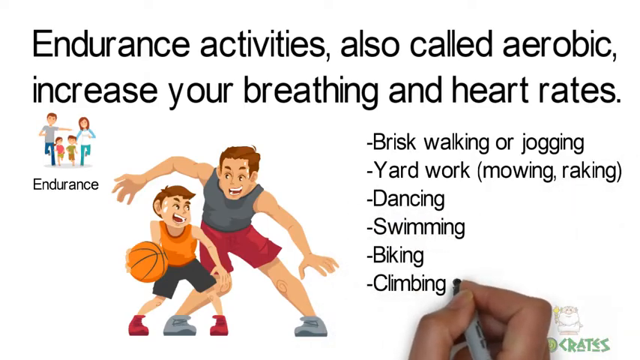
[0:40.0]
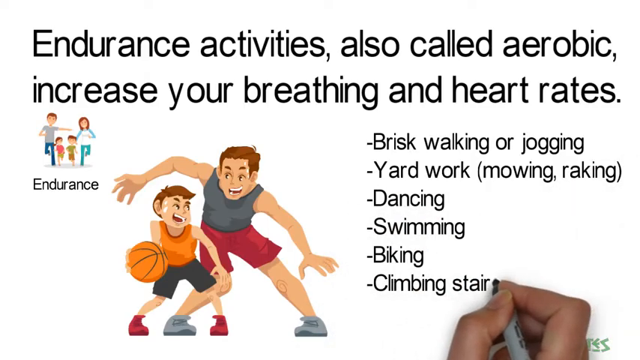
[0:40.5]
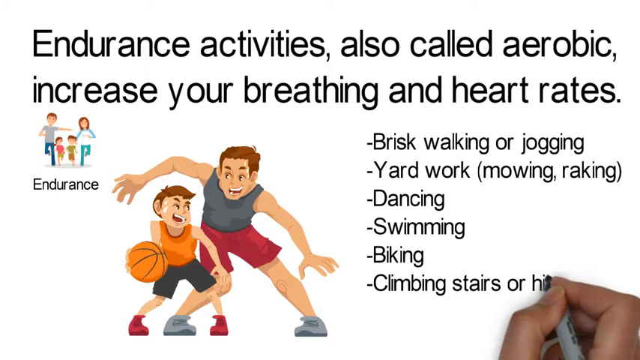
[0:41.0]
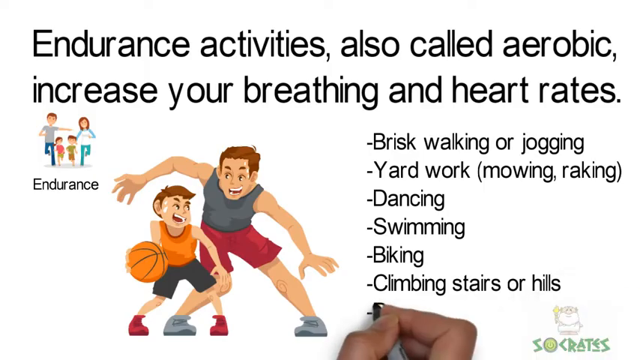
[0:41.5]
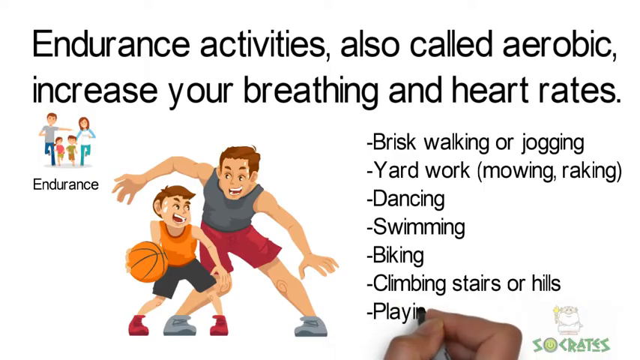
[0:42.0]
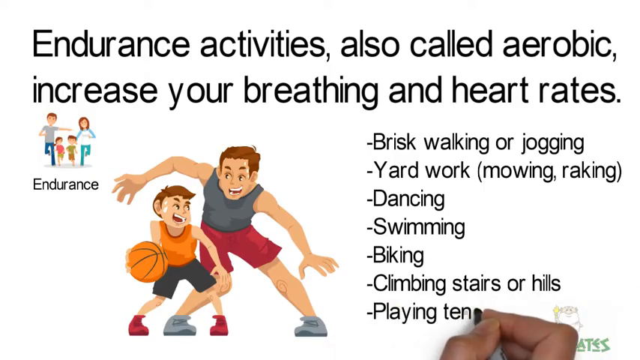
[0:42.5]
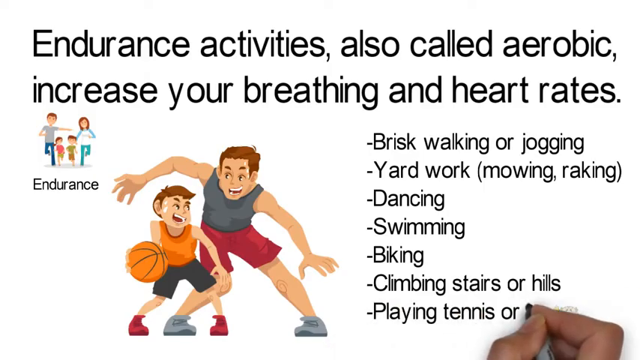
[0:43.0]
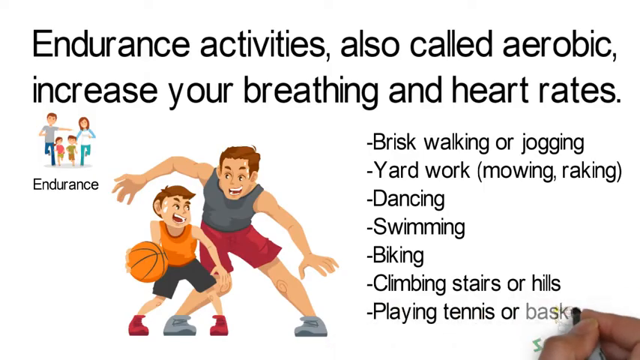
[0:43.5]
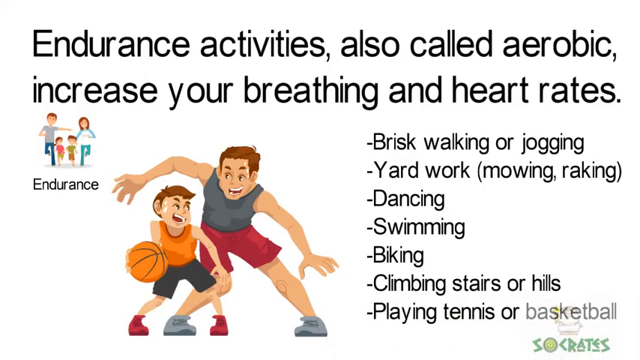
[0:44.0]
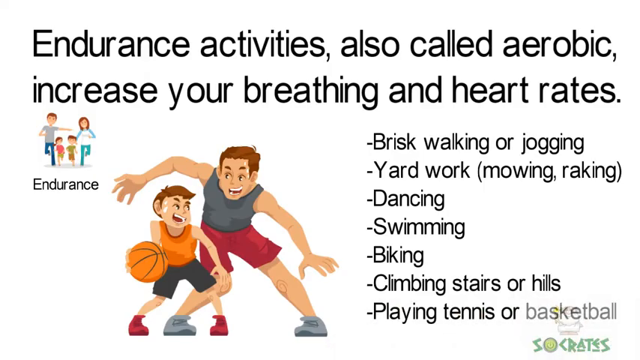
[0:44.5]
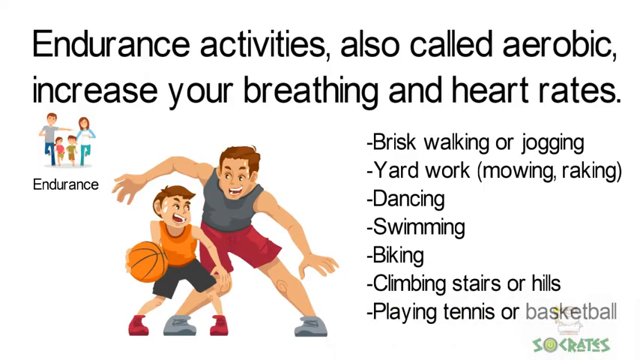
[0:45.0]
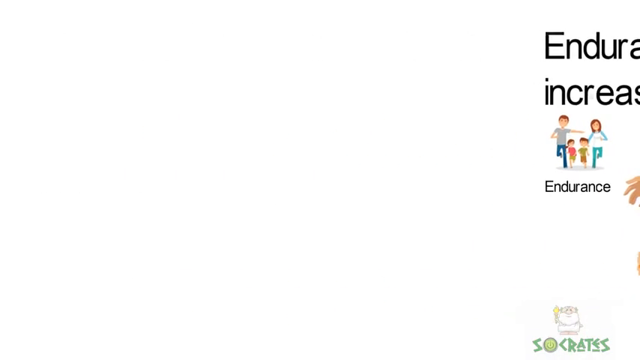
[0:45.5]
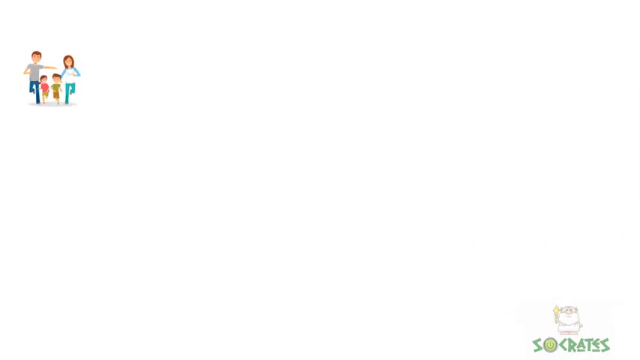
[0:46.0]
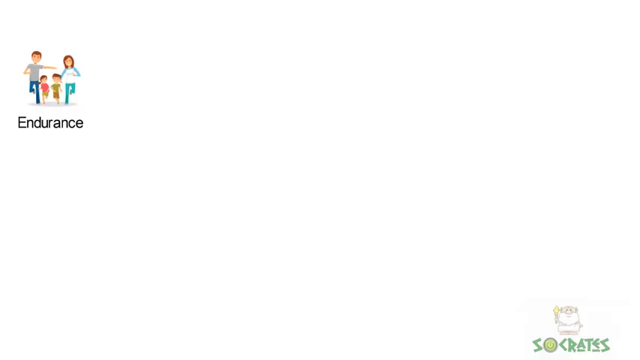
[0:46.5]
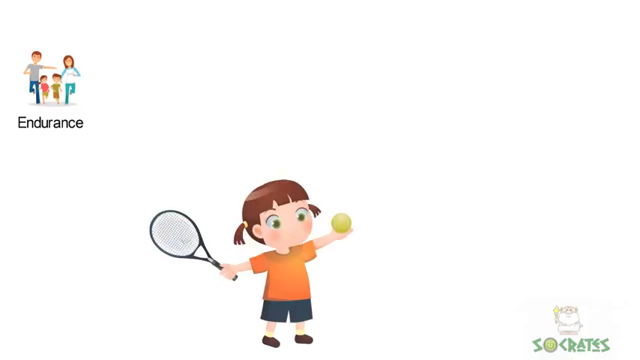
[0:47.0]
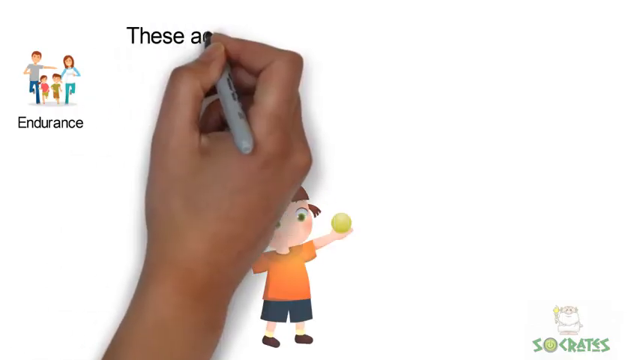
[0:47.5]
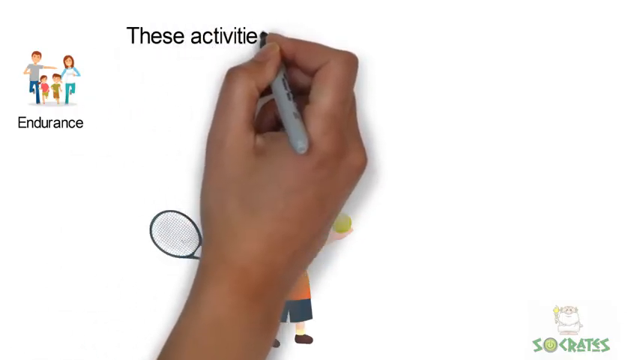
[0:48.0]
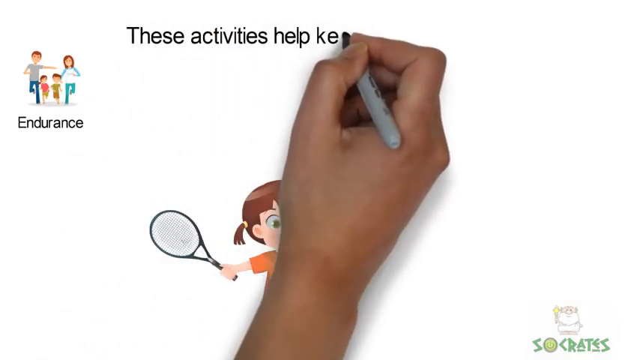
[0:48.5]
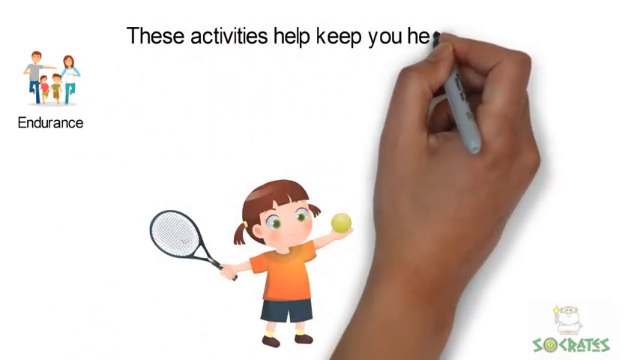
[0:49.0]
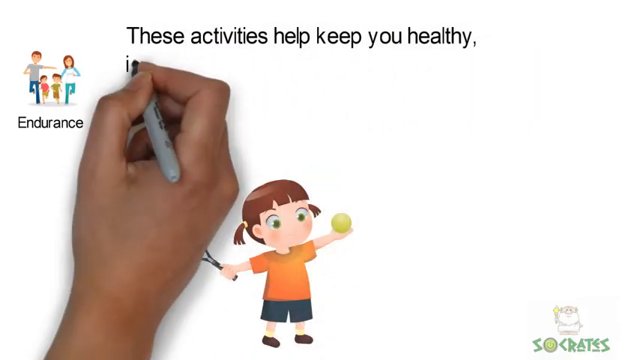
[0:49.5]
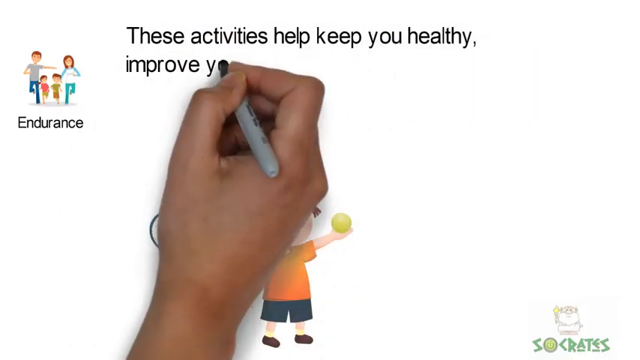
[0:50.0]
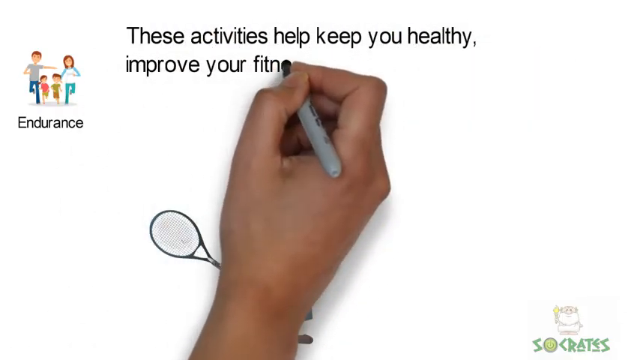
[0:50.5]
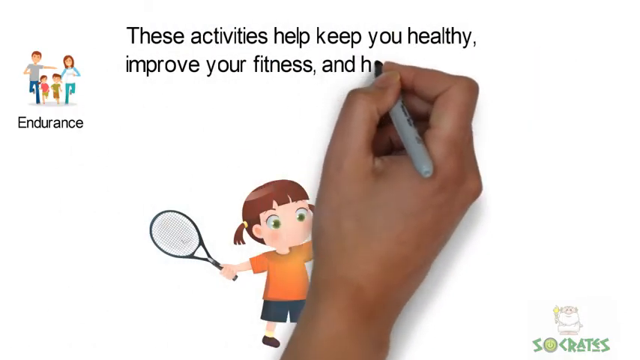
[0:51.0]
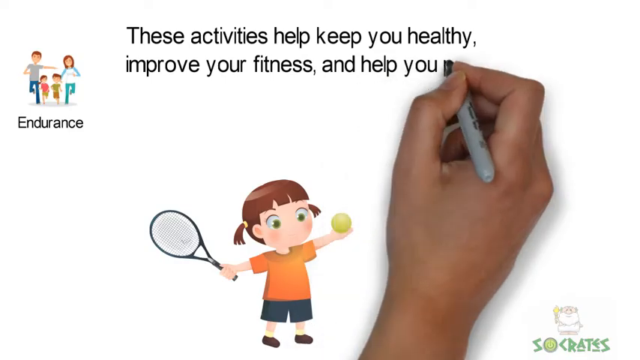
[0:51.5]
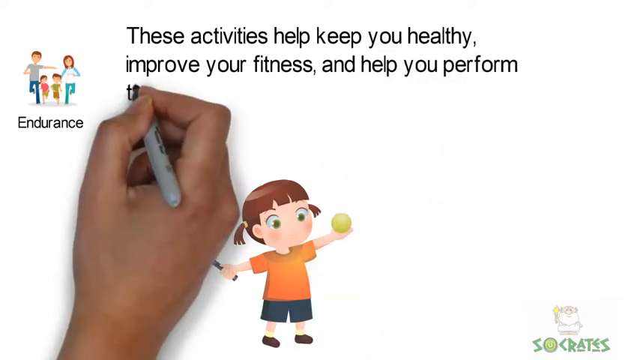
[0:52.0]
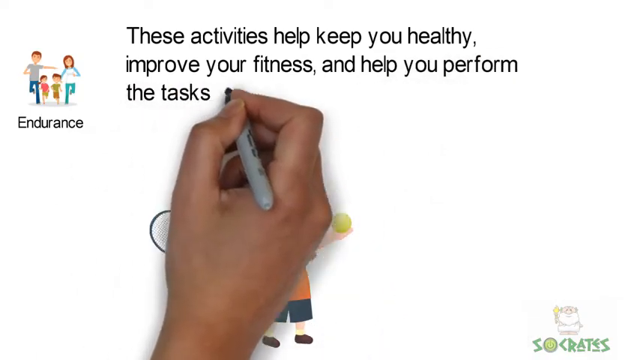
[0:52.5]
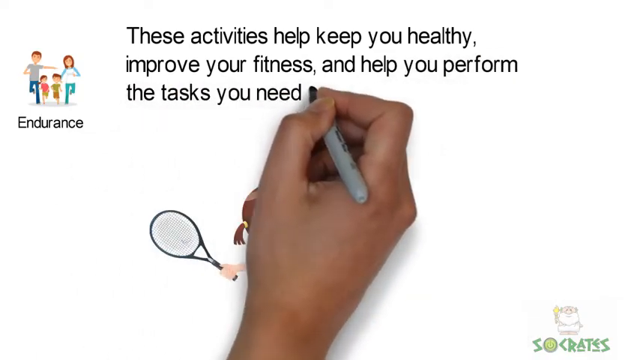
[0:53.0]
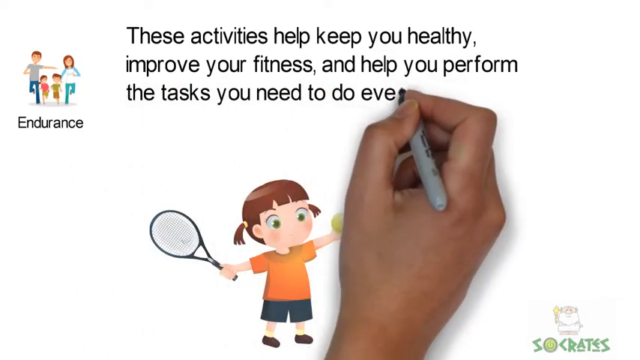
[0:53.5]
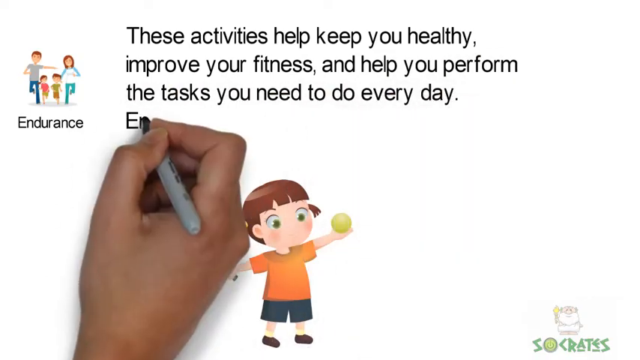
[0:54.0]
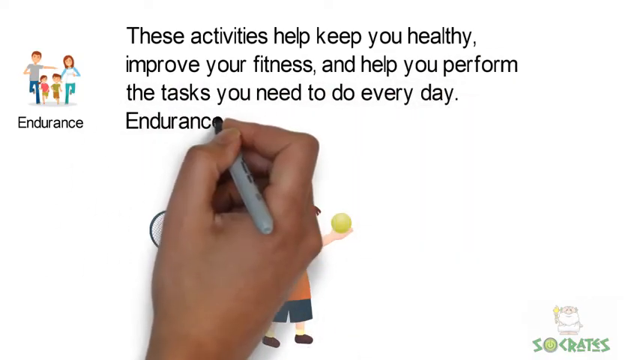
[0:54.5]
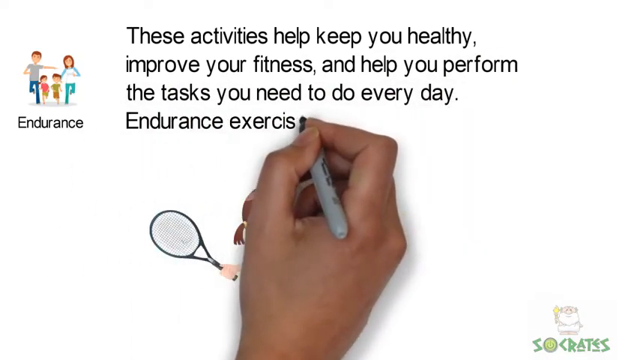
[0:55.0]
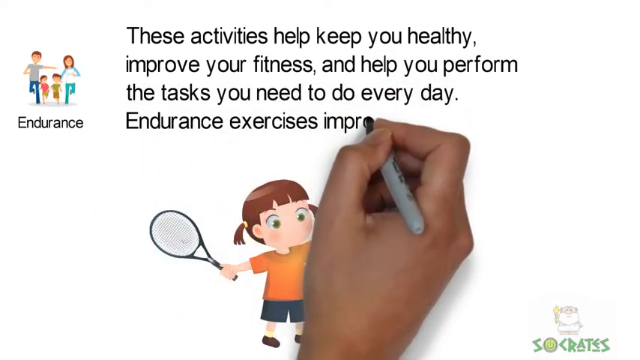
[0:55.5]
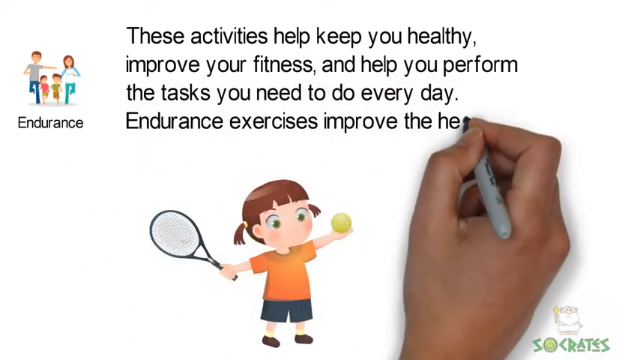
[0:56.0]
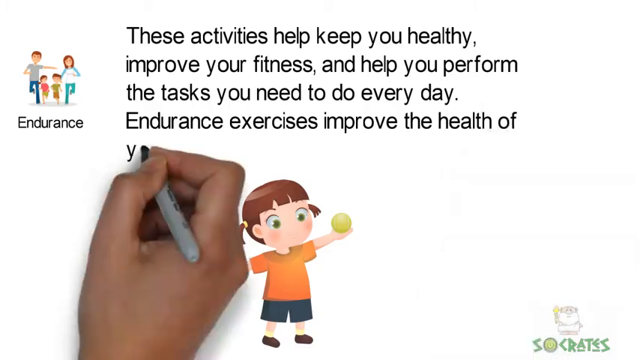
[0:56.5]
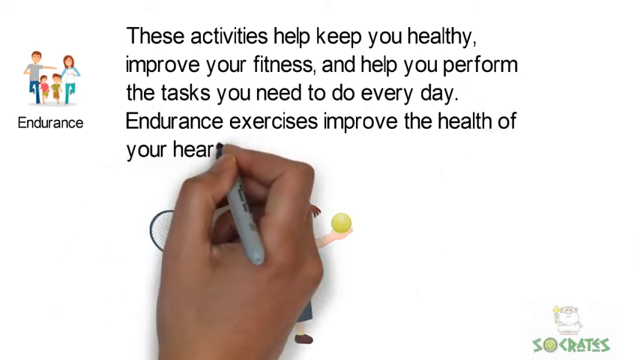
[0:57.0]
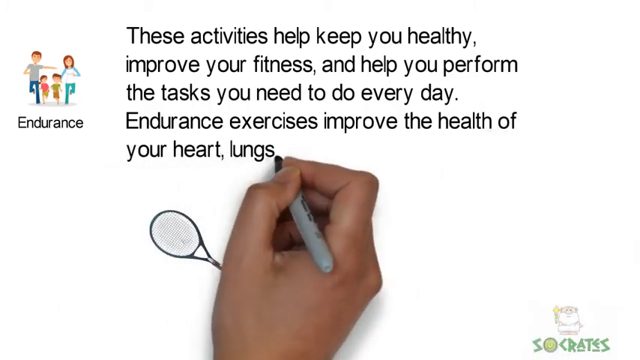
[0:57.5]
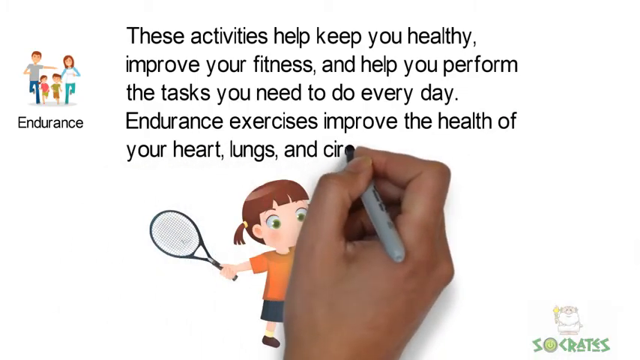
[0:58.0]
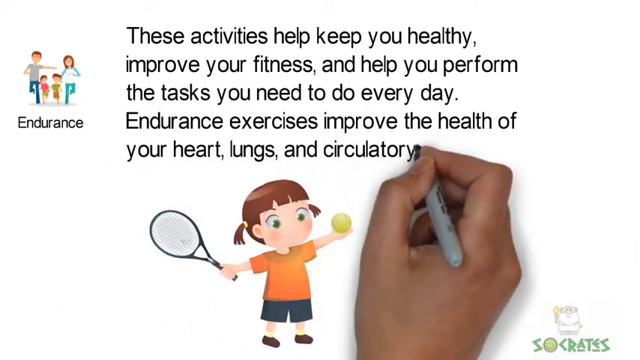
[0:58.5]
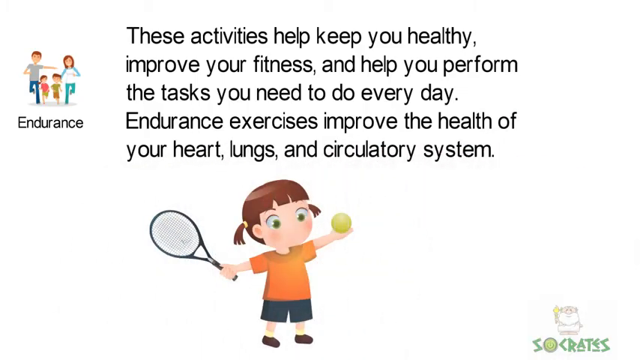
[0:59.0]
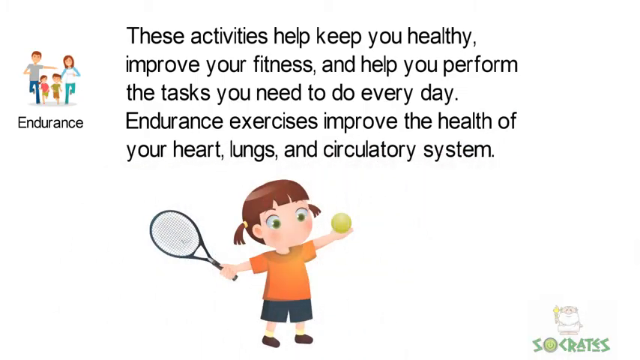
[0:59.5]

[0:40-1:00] The white screen shows black text at the top reading "endurance activities, also called aerobic, increase your breathing and heart rates." On the right side is a list running from top to bottom: "brisk walking or jogging, yard work, mowing, raking, dancing, swimming, biking, climbing stairs or hills, playing tennis or basketball." The screen then turns white again, and a hand holding a gray Sharpie marker with a black tip writes along the top: "these activities help keep you healthy, improve your fitness, and help you perform the tasks you need to do every day. Endurance exercises improve the health of your heart, lungs, and circulatory system." Underneath is a cartoon girl with brown hair in pigtails coming off both sides of her head, wearing a short-sleeved orange shirt and blue shorts. Her arms are spread out to her sides, with a tennis racket in her right hand and a yellow tennis ball in her left hand.